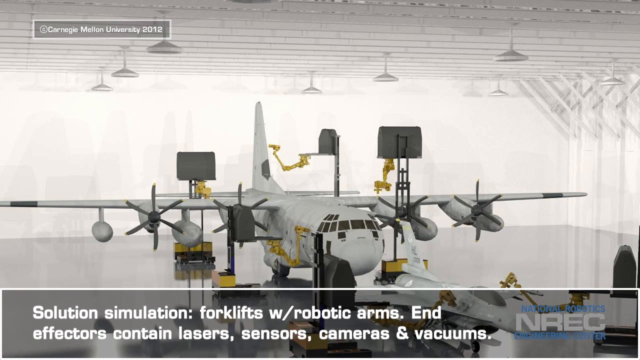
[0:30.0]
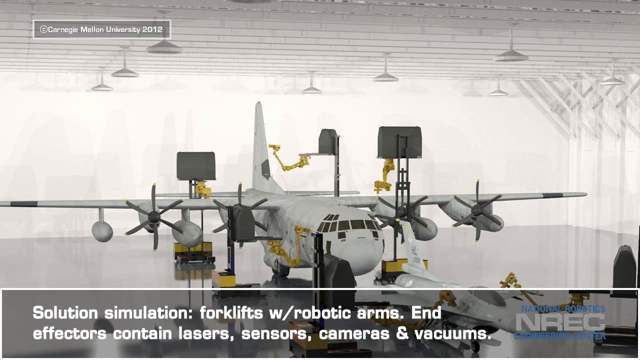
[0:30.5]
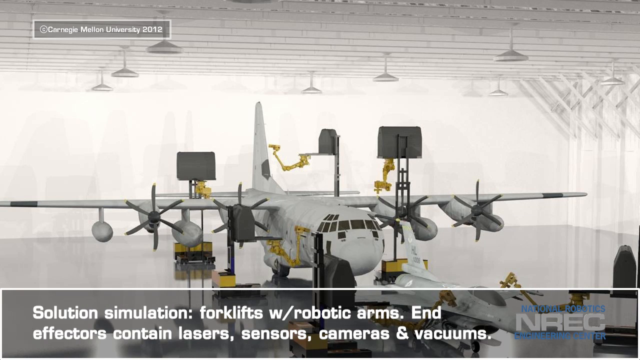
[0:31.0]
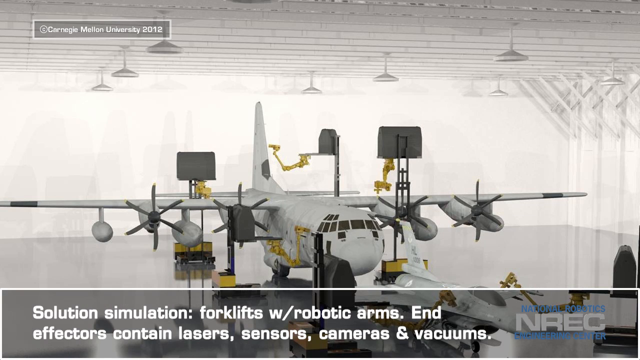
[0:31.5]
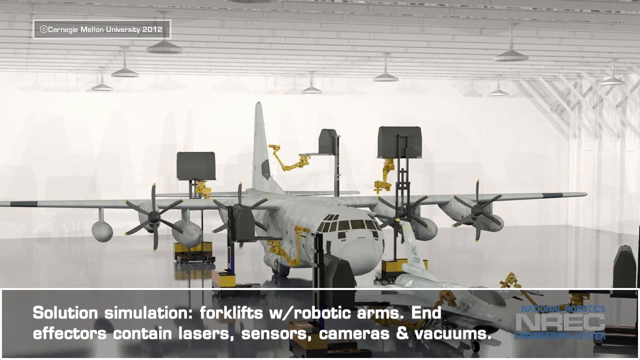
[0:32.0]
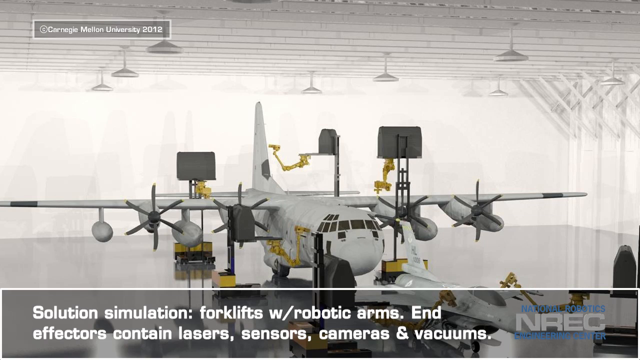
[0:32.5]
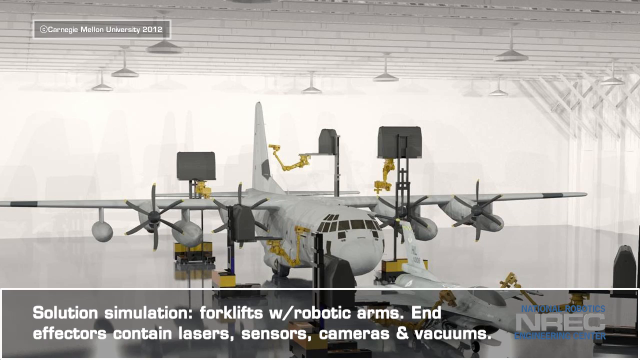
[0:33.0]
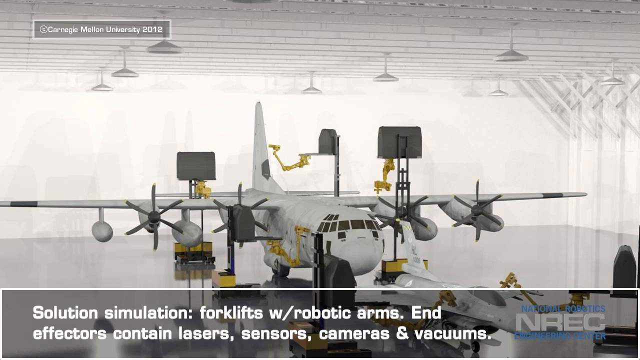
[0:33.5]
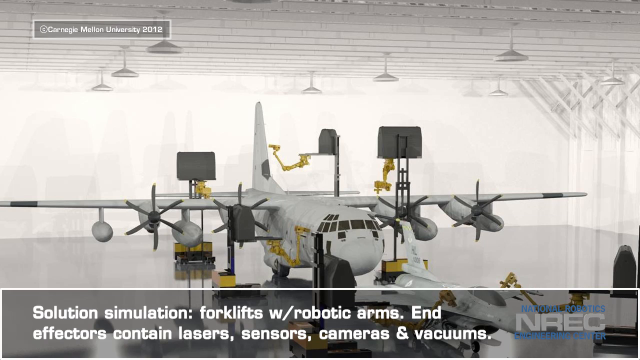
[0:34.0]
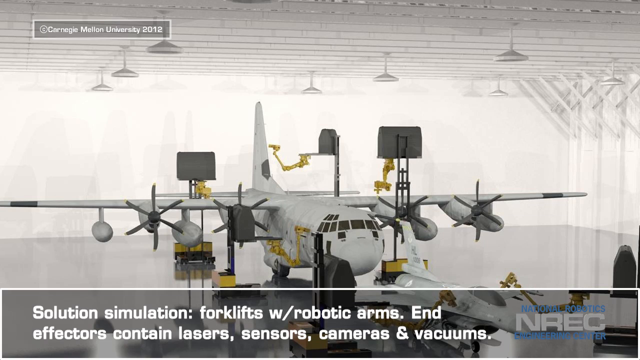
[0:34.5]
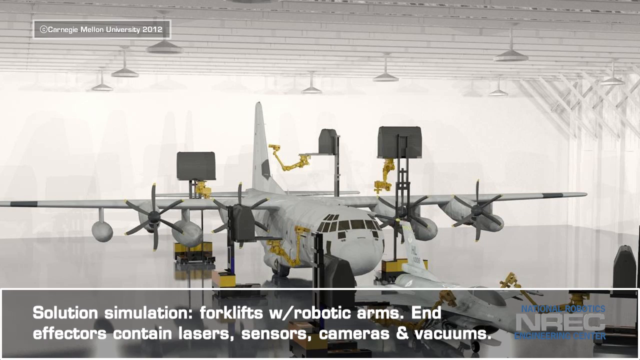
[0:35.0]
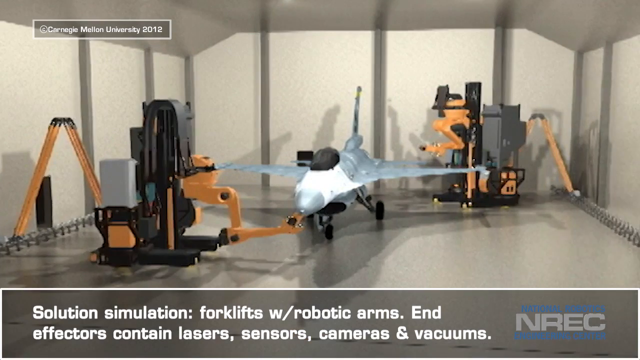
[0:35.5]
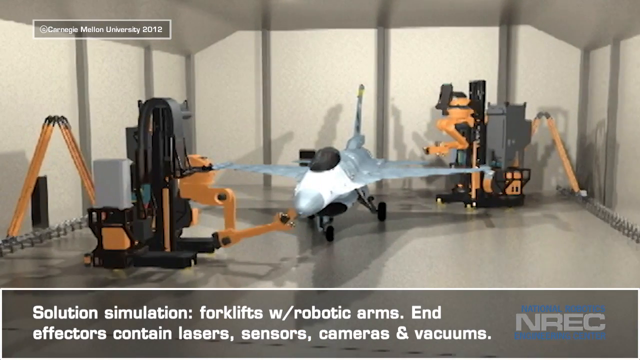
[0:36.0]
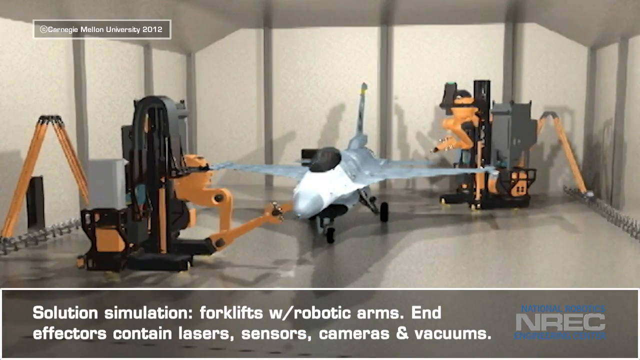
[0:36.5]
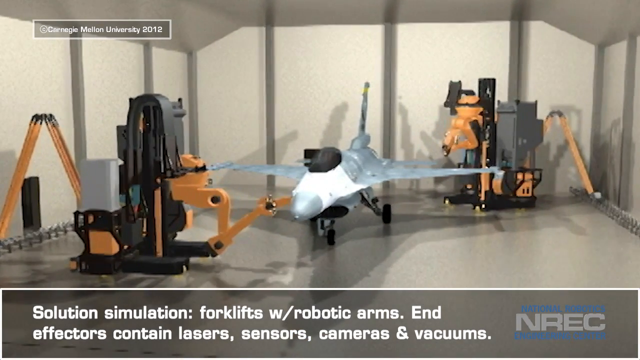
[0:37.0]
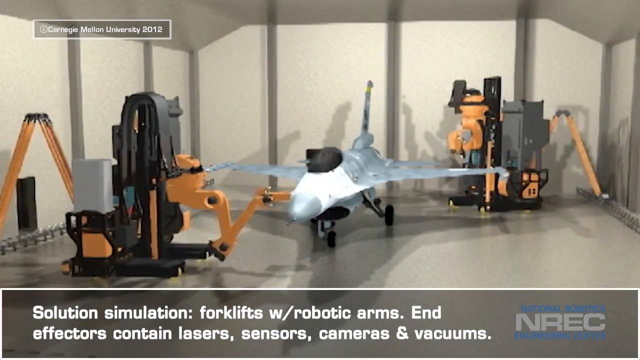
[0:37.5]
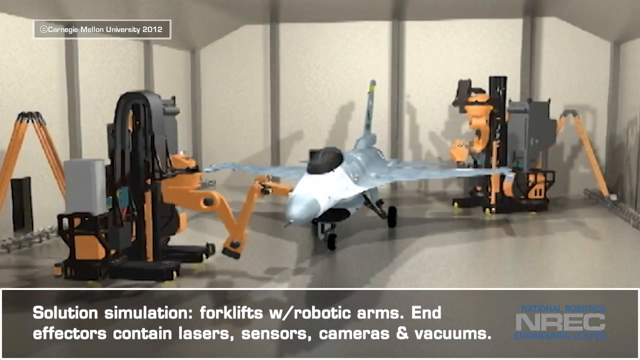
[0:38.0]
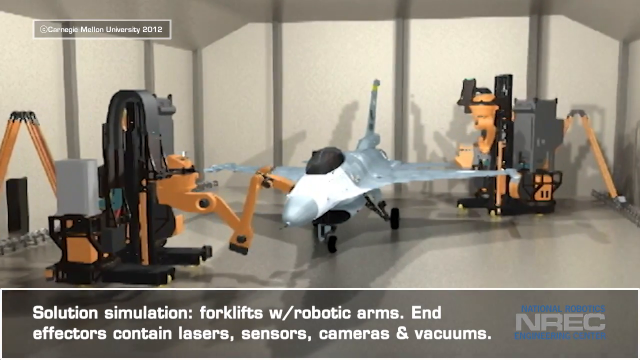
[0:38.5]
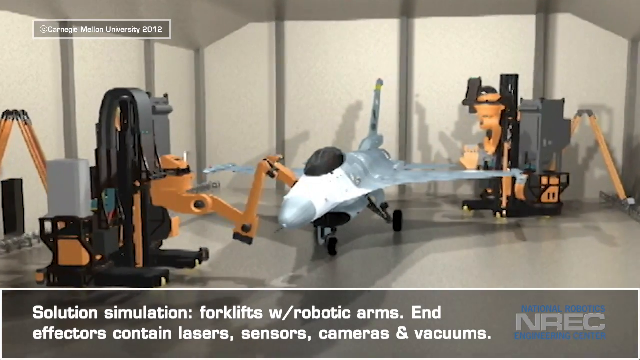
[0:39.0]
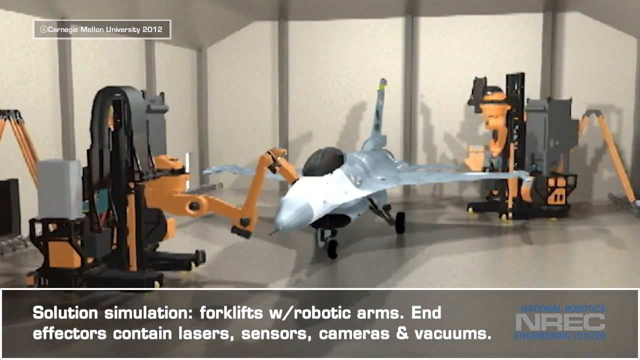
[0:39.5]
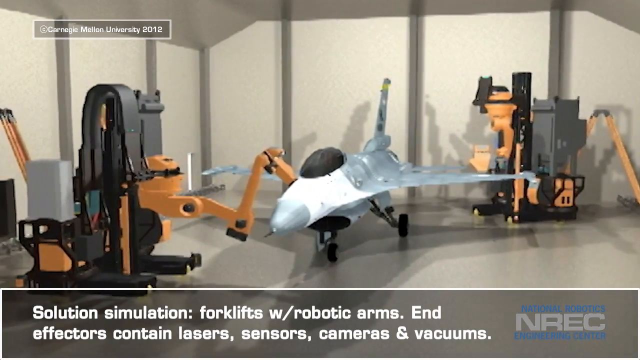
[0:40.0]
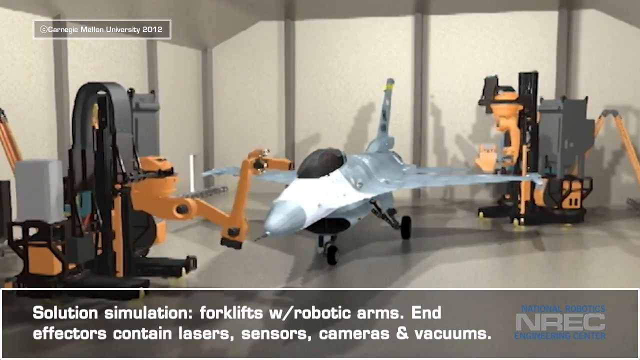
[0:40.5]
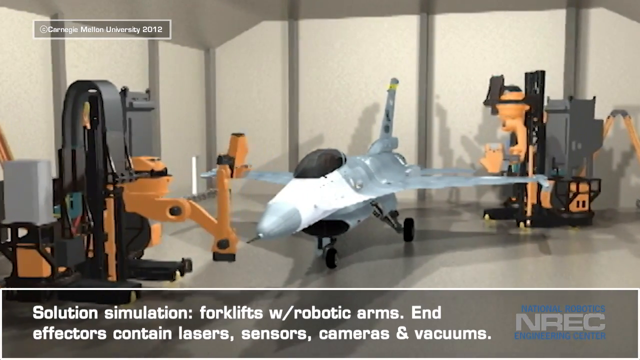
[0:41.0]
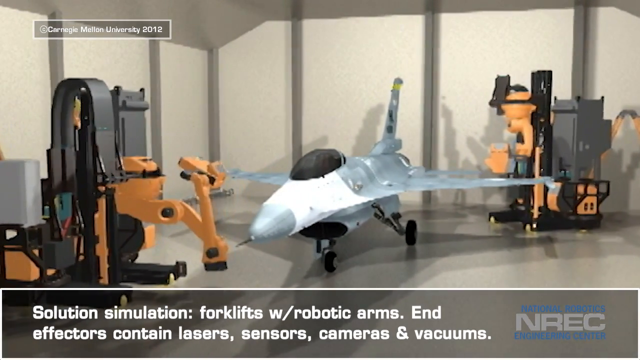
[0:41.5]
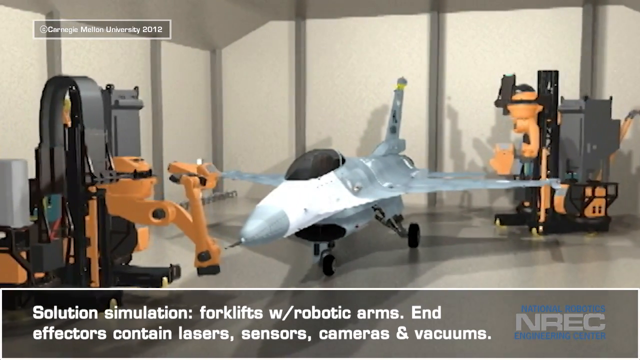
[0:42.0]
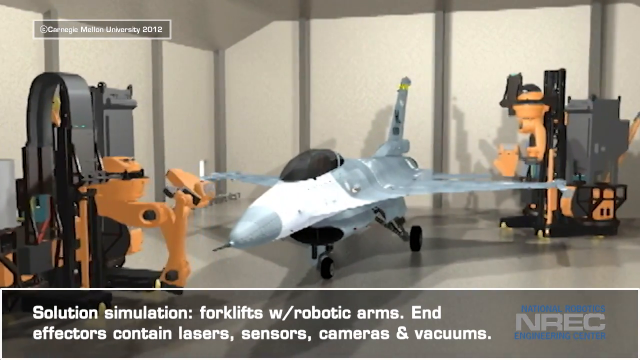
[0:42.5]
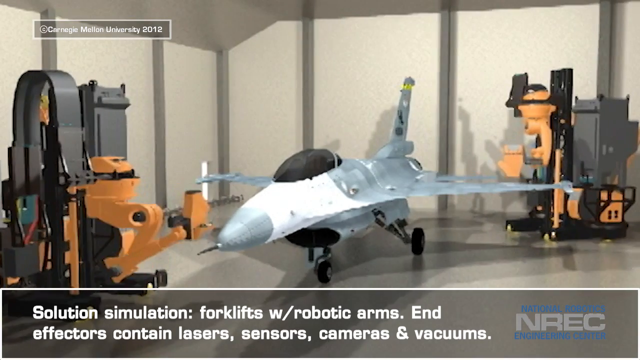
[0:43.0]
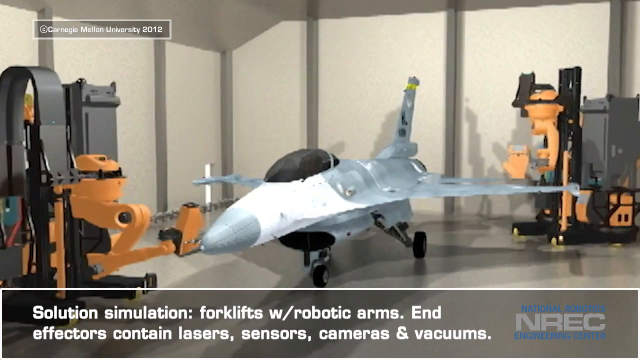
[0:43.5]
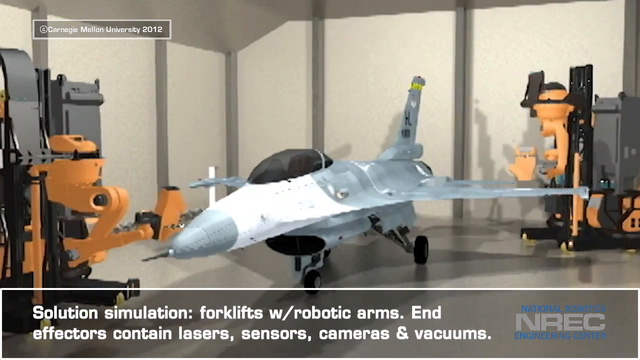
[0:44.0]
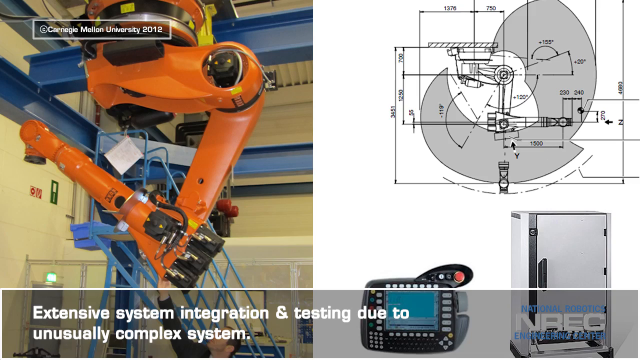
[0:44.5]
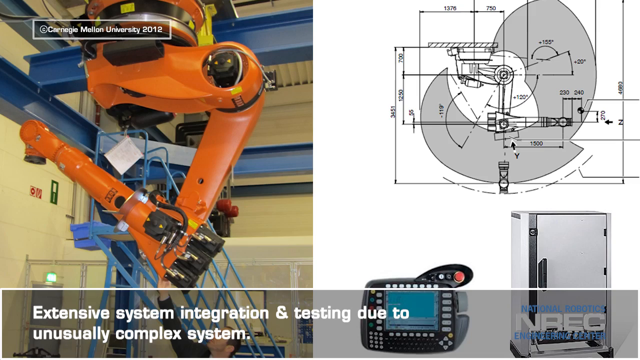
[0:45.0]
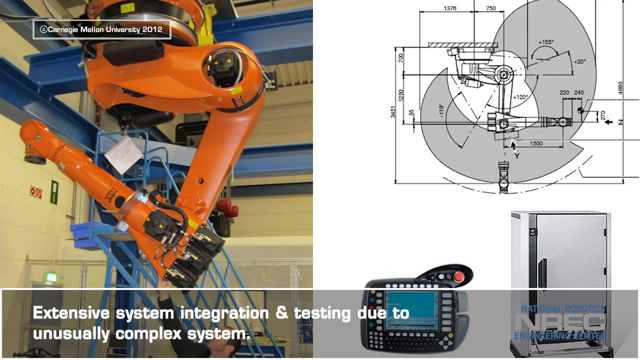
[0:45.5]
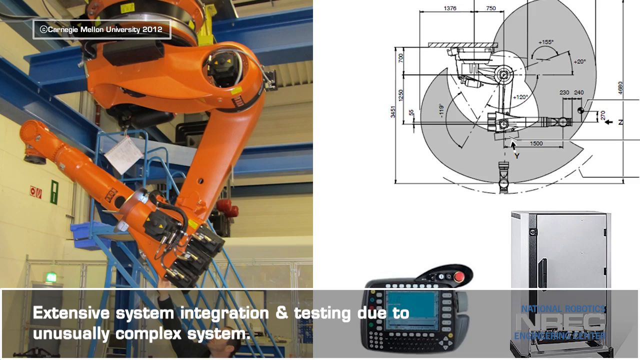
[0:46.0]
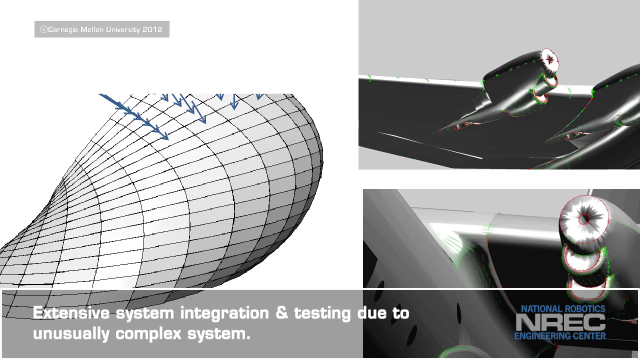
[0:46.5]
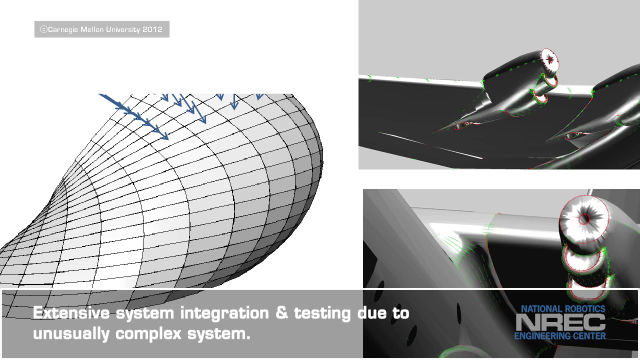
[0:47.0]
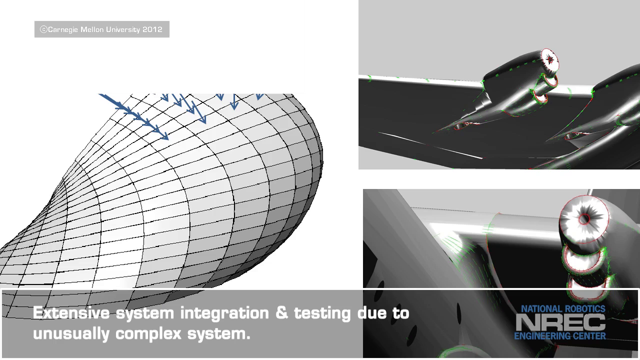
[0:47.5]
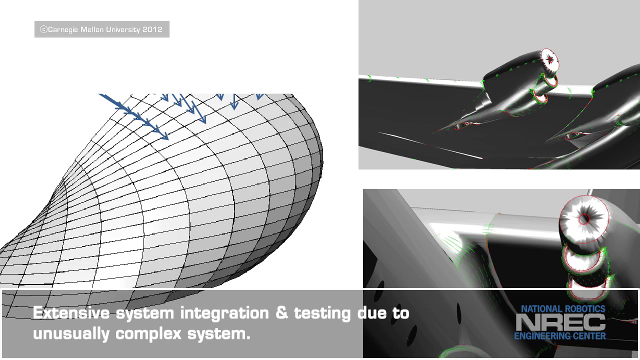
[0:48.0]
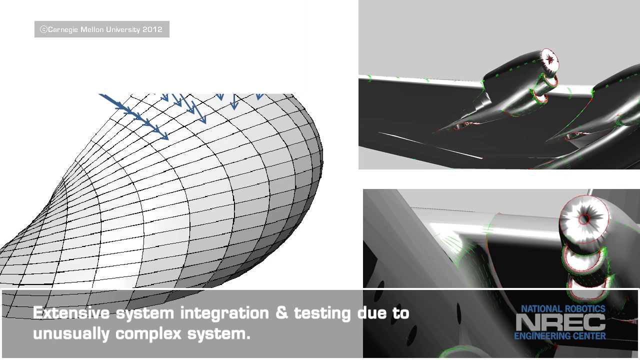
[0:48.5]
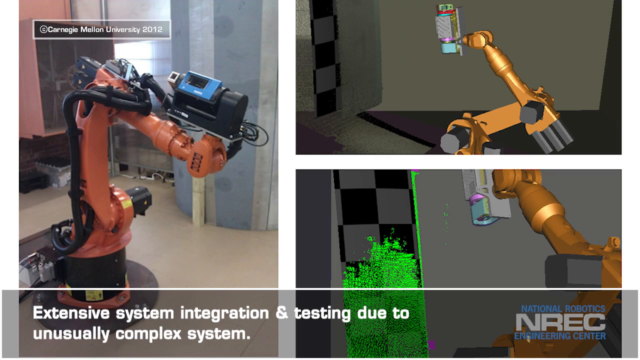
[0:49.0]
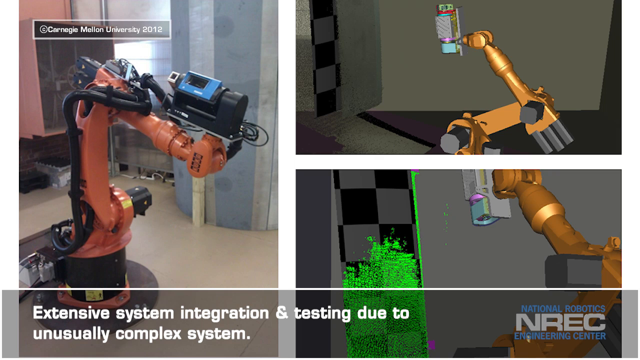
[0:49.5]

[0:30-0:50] The scene appears to be a large, well-lit hangar or a simulation, with bright white ceilings and an open back and sides in a large warehouse-type space. A bright white robotic plane is on the ground, with its propellers visible and its door open. A marquee bar at the bottom, with white text on a dark gray background, reads "Forklifts with robotic arms and effectors and laser sensors, cameras, and vacuums." The view moves to another room with another robotic plane, where many forklifts appear to be moving or working on the plane, and robotic arms come down and assemble pieces on it. Another image shows different angles.